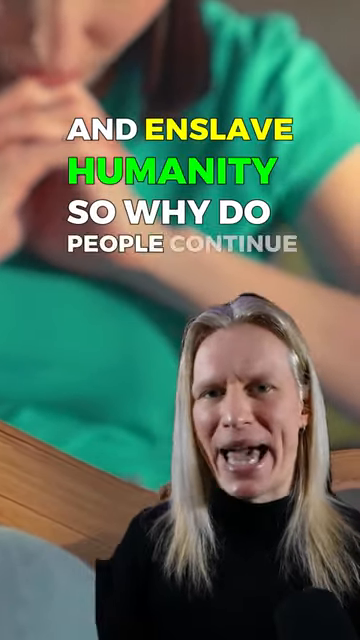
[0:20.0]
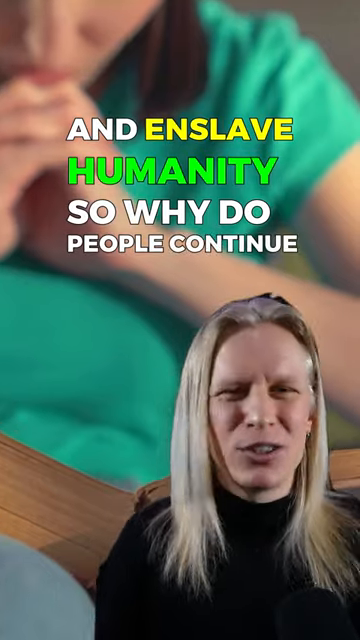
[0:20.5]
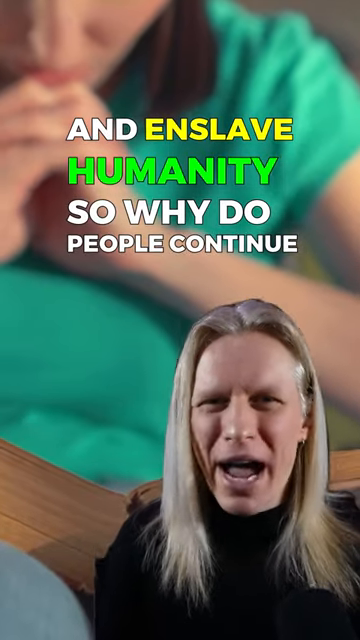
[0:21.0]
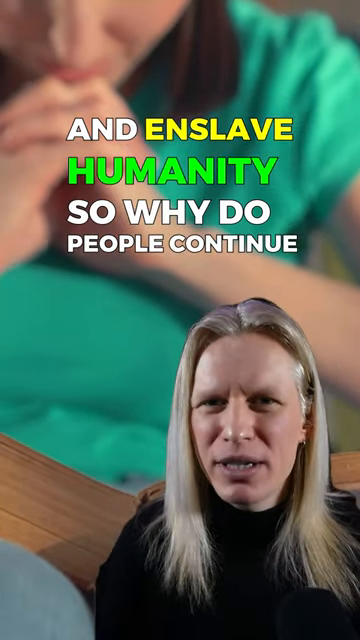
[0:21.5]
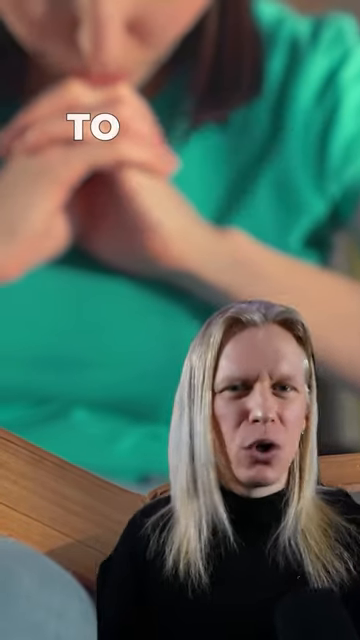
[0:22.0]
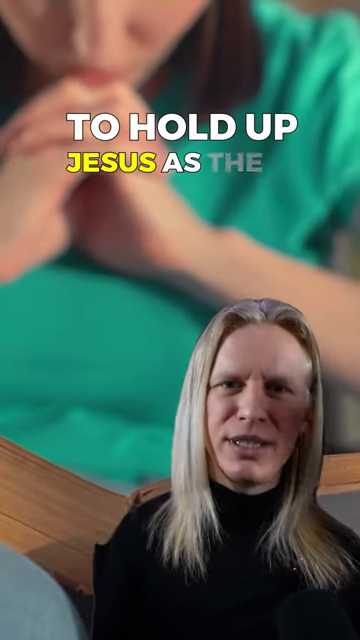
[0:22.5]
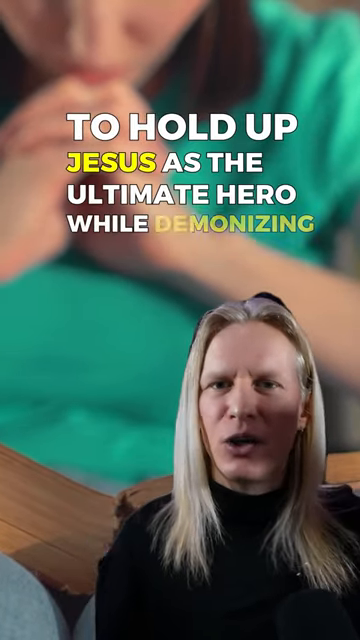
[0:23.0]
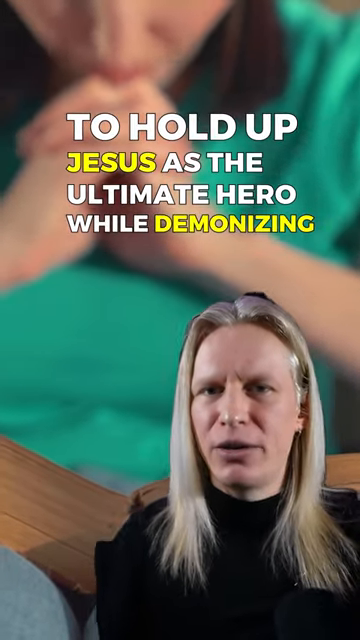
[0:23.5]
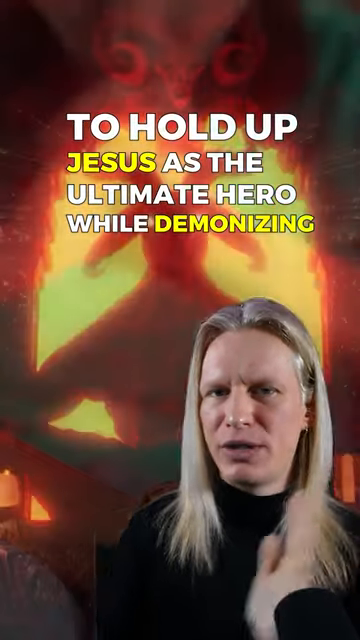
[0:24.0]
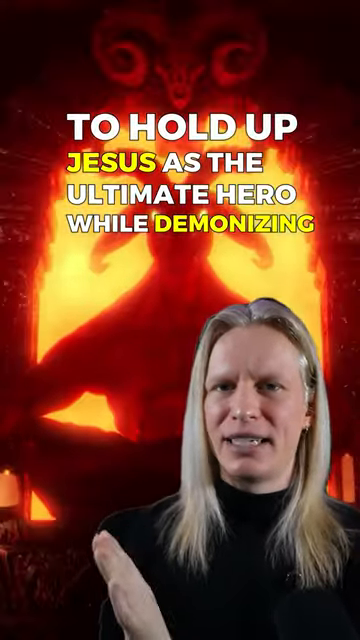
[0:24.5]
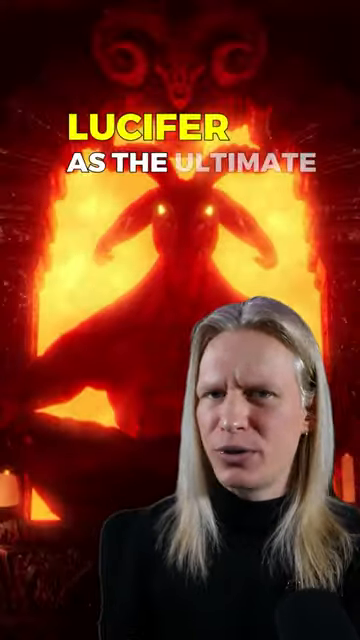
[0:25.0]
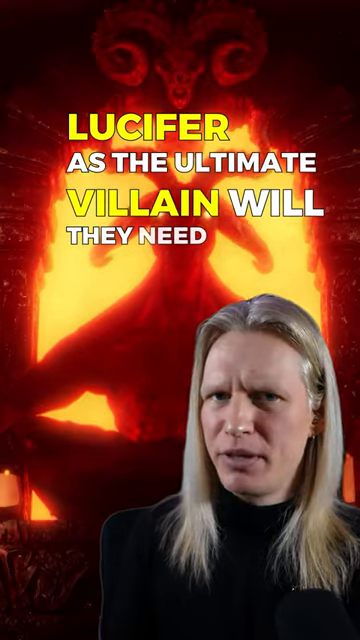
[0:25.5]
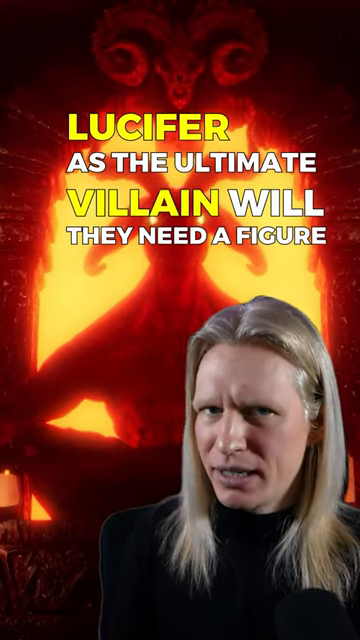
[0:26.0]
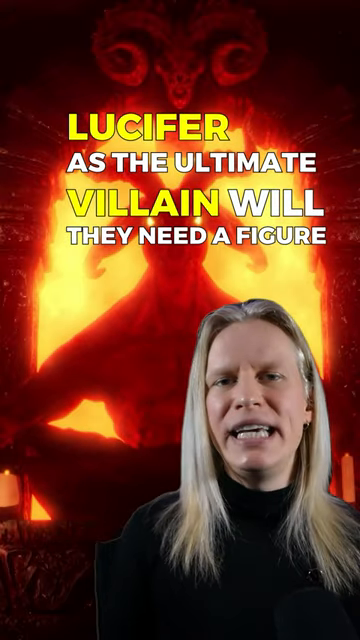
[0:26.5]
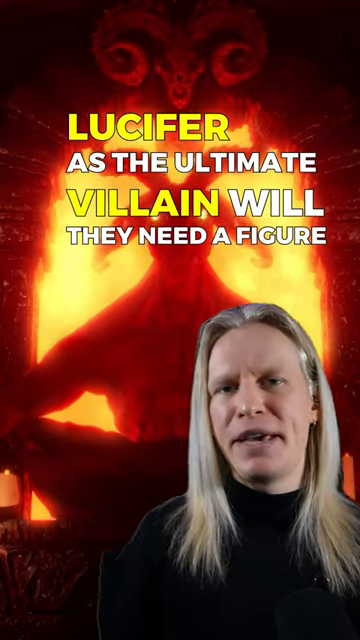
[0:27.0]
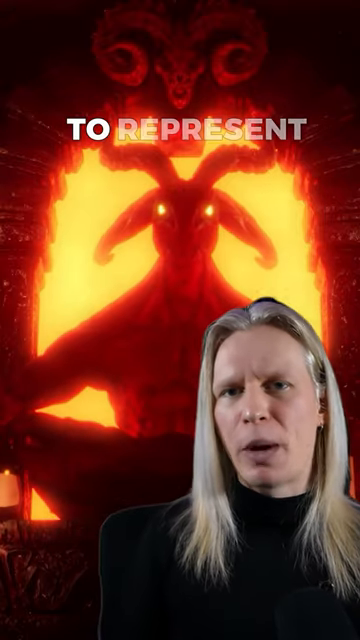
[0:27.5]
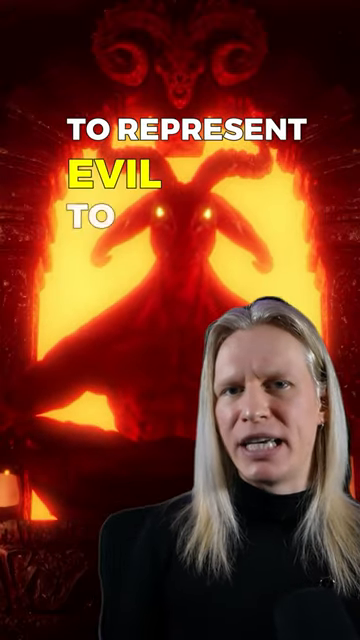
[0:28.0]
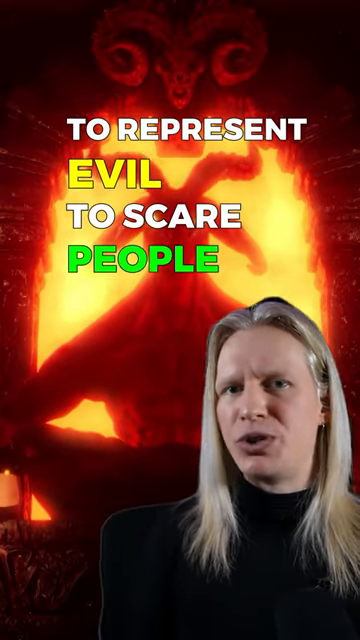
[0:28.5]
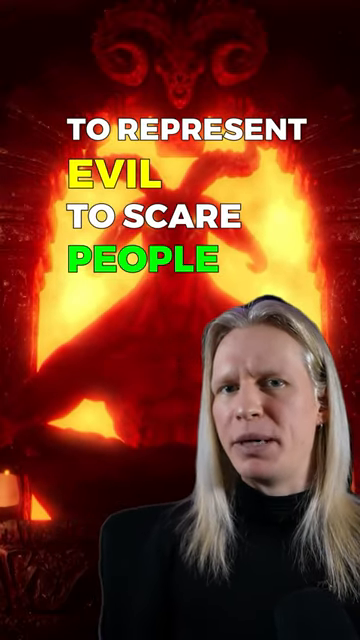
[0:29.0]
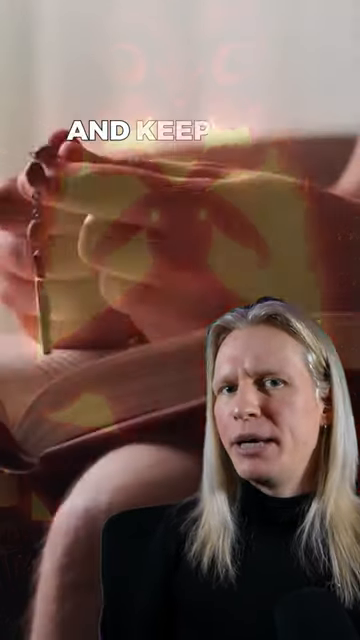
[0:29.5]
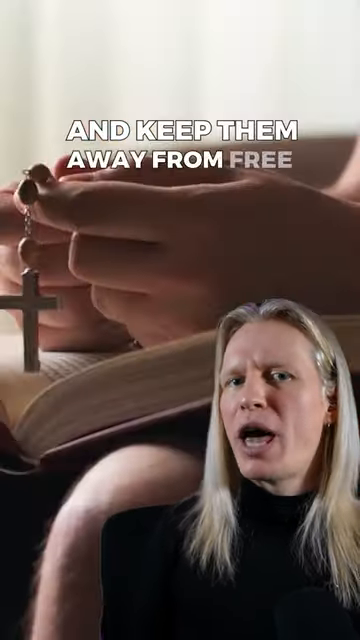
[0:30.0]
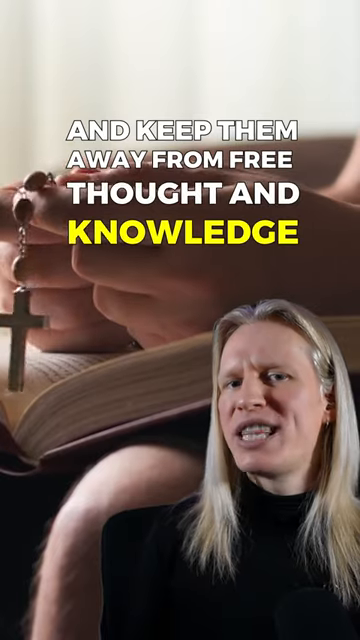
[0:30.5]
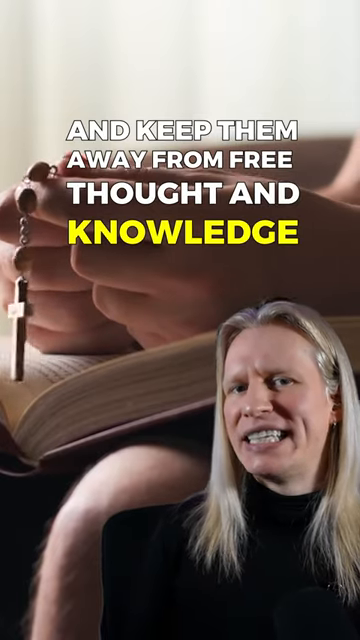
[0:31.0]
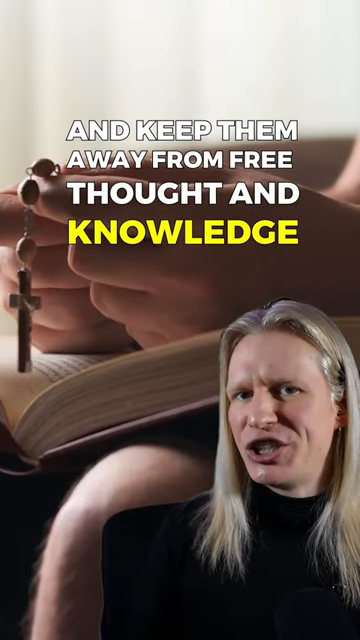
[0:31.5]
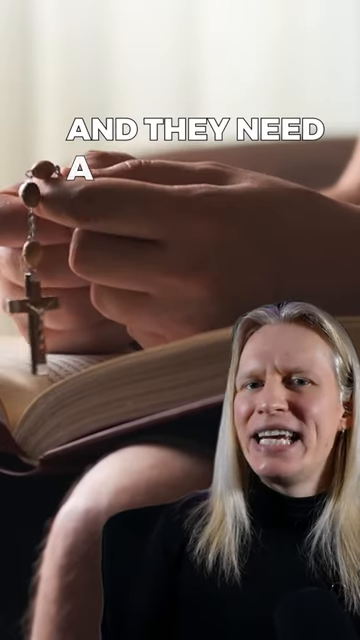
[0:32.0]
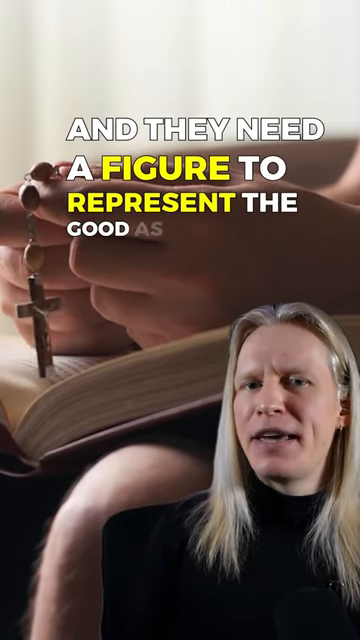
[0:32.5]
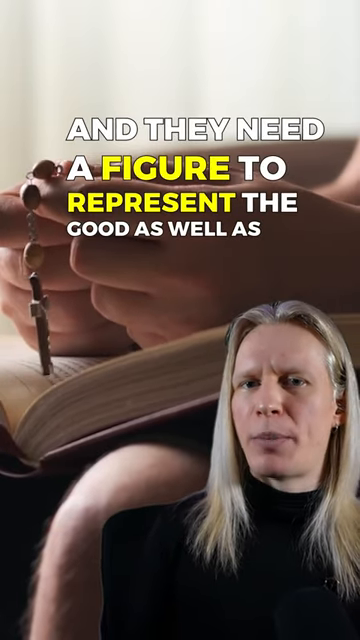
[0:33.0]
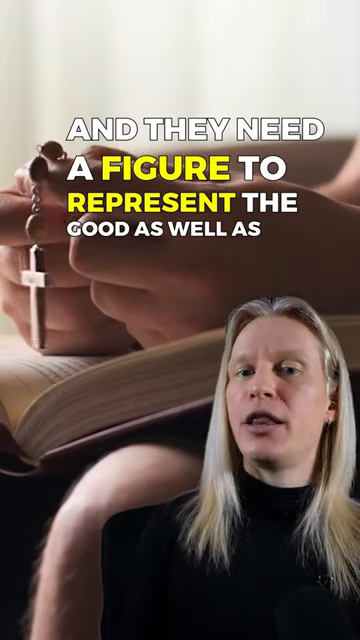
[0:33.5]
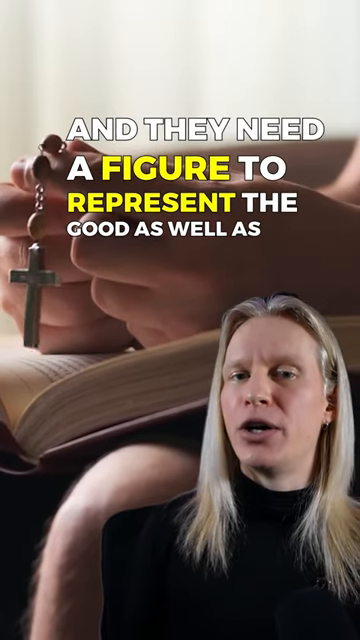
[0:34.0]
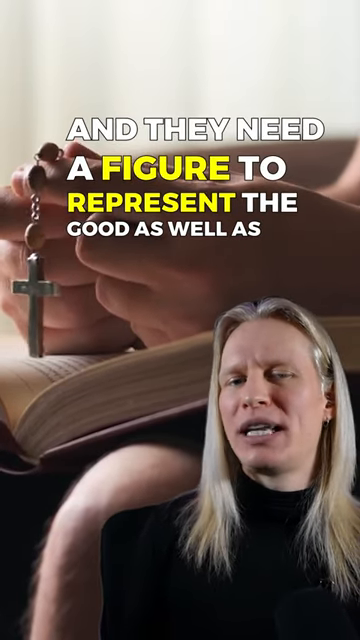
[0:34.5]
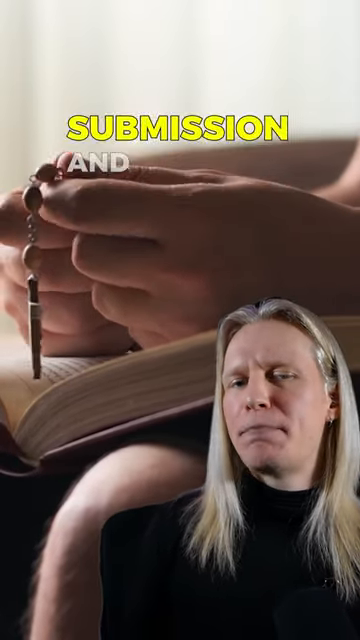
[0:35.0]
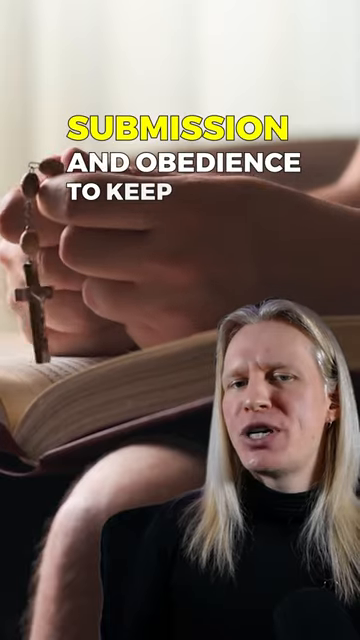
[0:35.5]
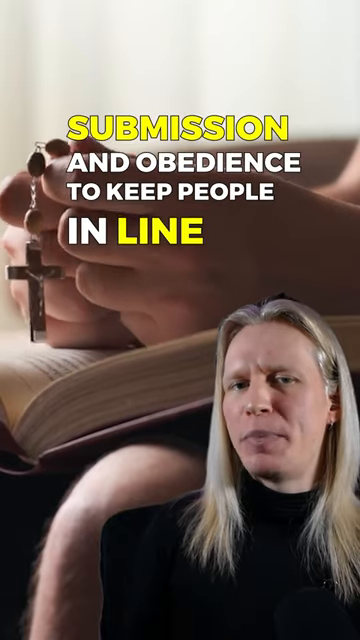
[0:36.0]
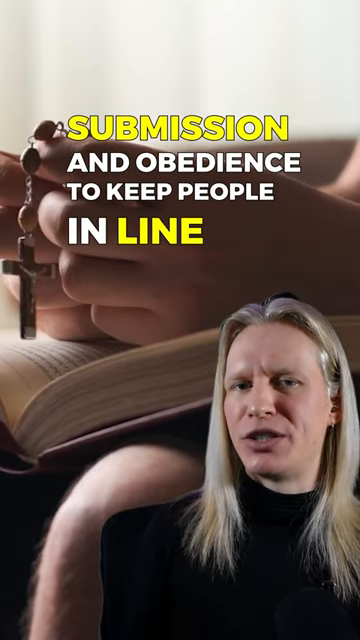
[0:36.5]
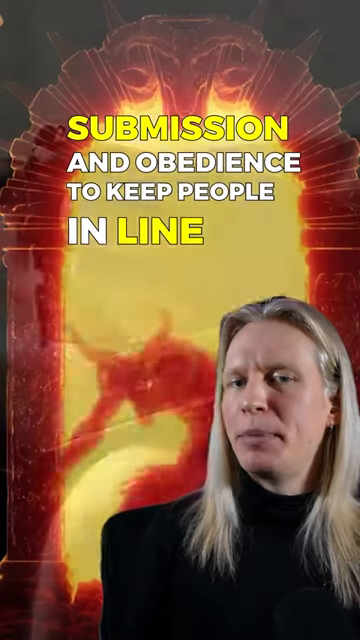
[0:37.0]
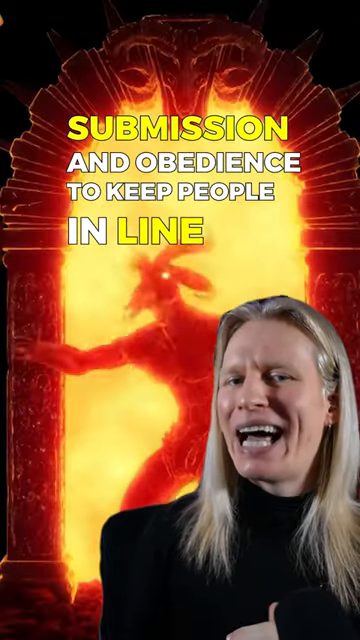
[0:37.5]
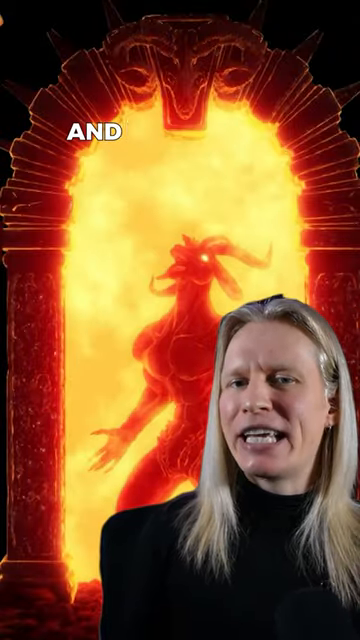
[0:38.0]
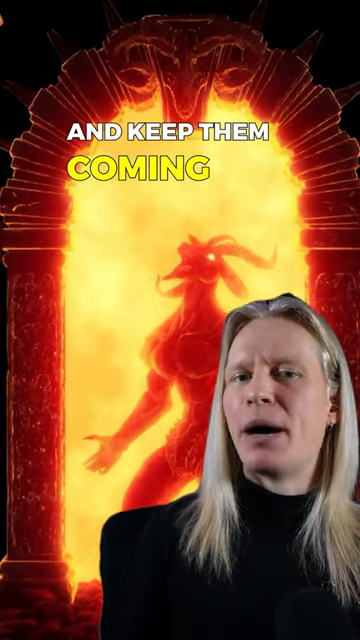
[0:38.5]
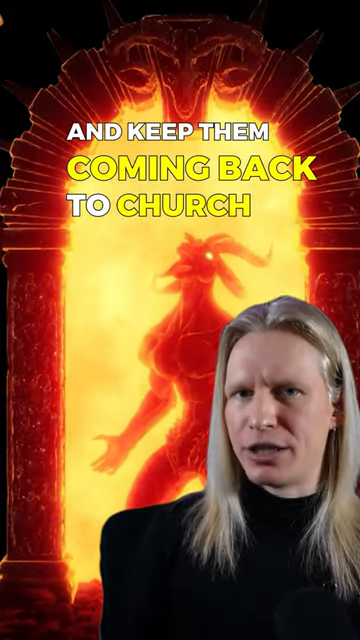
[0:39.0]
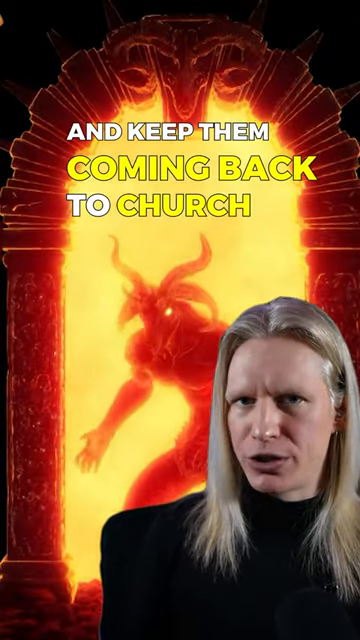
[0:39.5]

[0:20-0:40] The on-screen text continues from "enslave humanity": "to hold up Jesus as the ultimate hero while demonizing Lucifer as the ultimate villain. Well, they need a figure to represent evil to scare people and keep them away from free thought and knowledge. And they need a figure to represent the good as well as submission and obedience to keep people in line and keep them coming back to church." The man stays in the same position in the bottom right of the screen. He looks pretty passionate while speaking but relatively calm and matter-of-fact, and seems somewhat sure of himself. The imagery behind him is strong: several images of Lucifer with horns, and a cove filled with fire and red, contrasted with a blurred image of a person praying, holding open the Bible in church, and holding a rosary. Religious imagery and satanic-type content are contrasted as he finishes his speech.